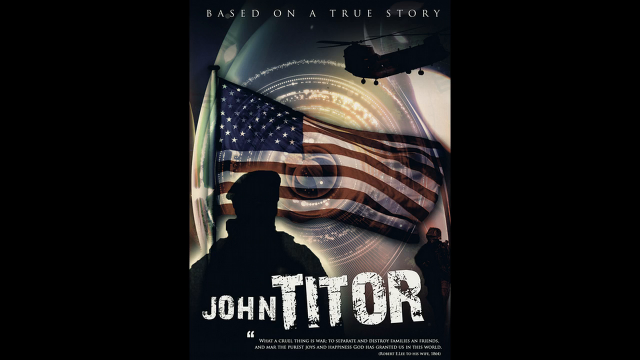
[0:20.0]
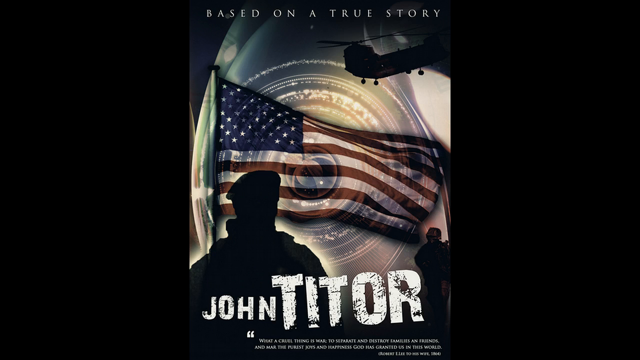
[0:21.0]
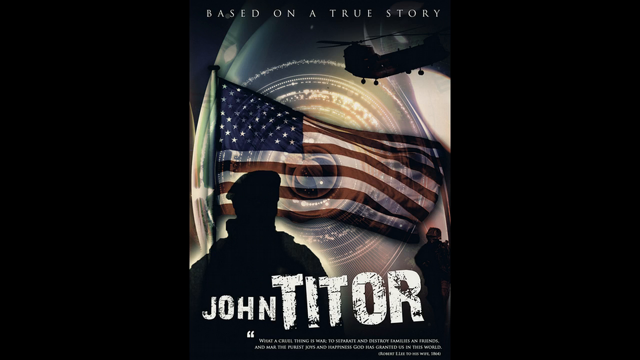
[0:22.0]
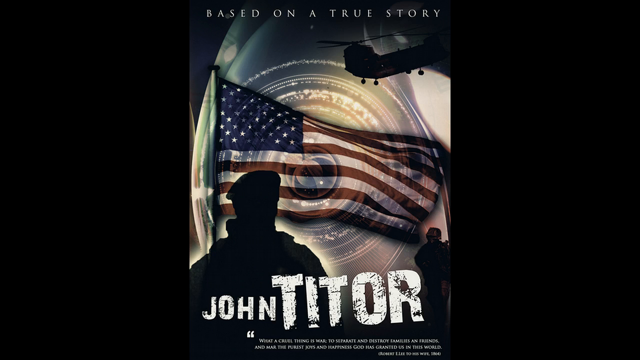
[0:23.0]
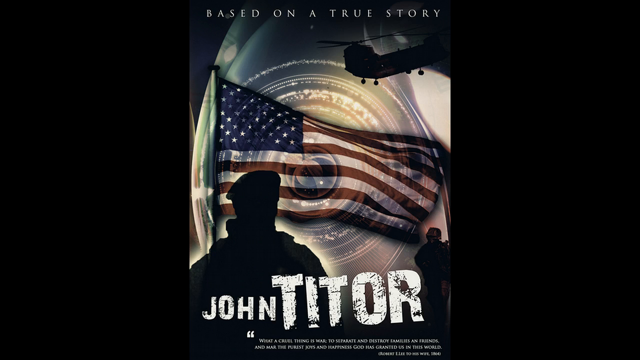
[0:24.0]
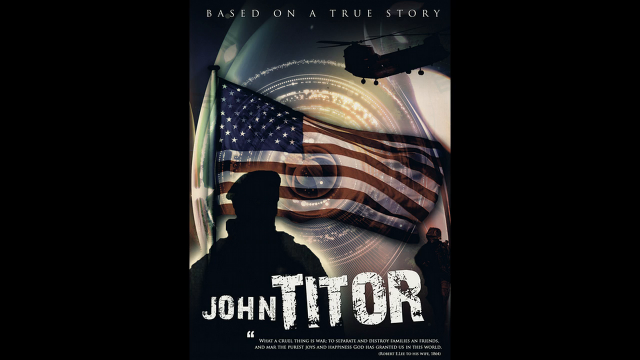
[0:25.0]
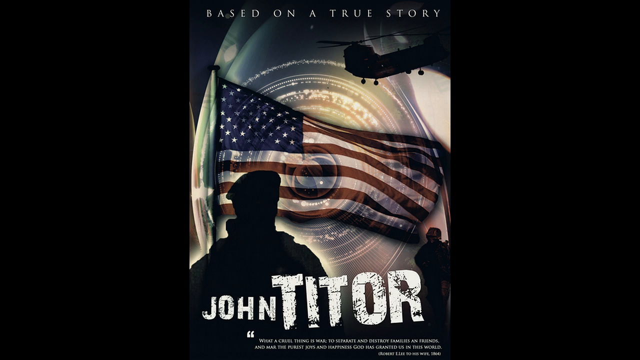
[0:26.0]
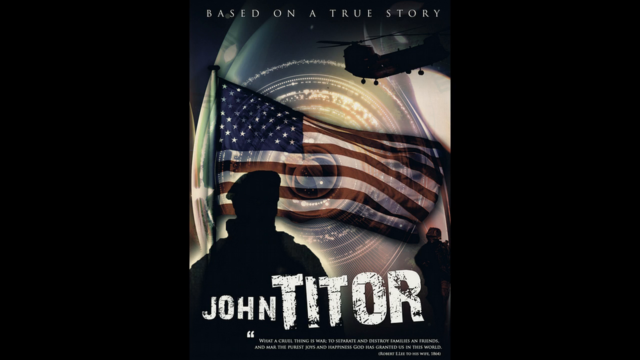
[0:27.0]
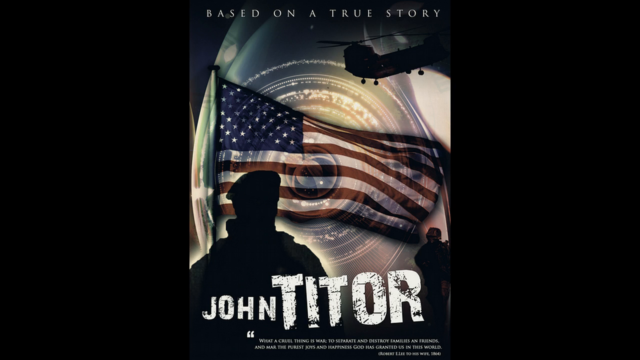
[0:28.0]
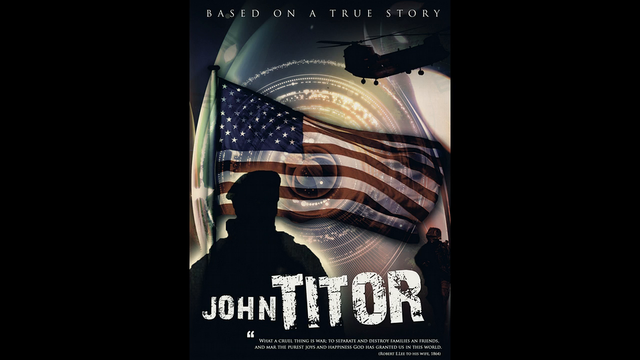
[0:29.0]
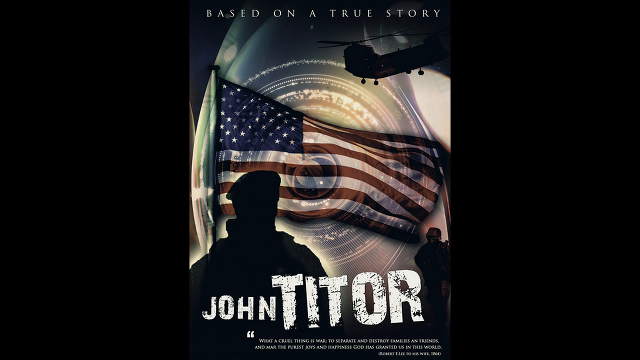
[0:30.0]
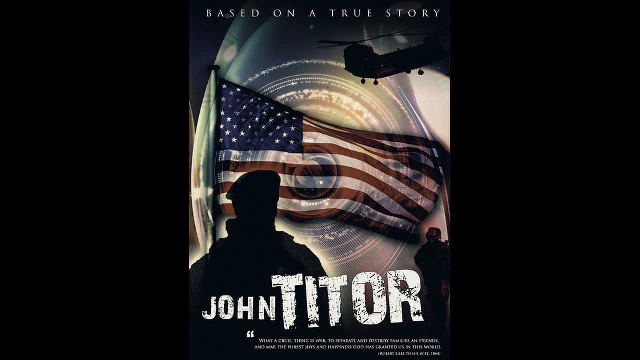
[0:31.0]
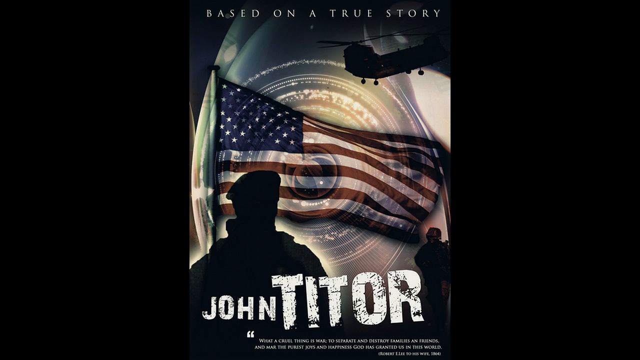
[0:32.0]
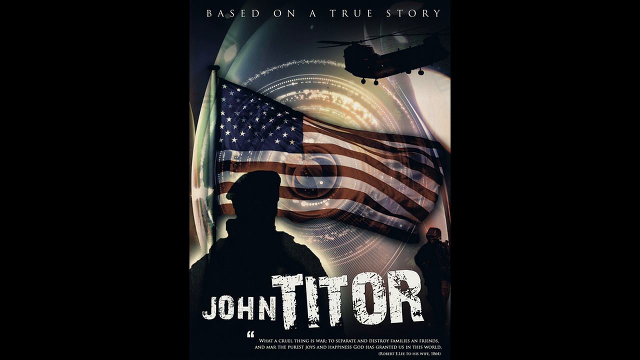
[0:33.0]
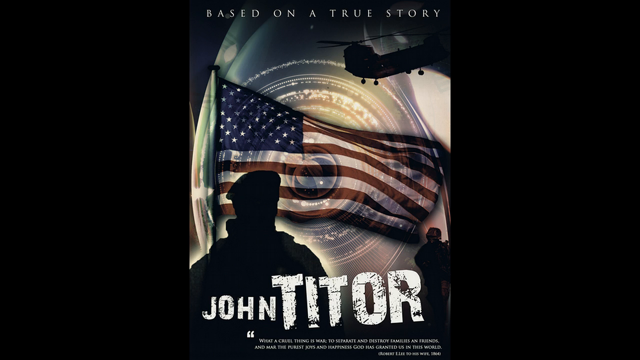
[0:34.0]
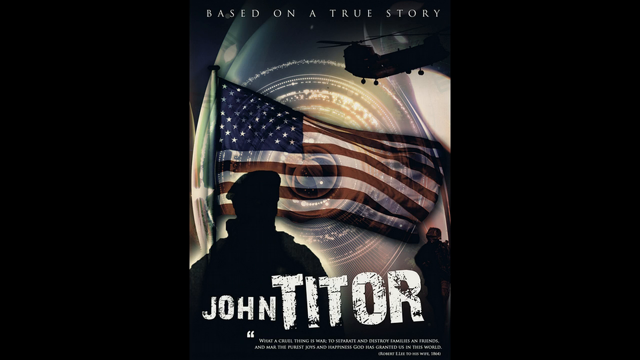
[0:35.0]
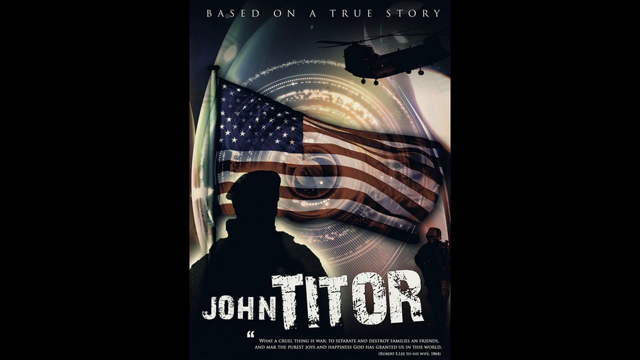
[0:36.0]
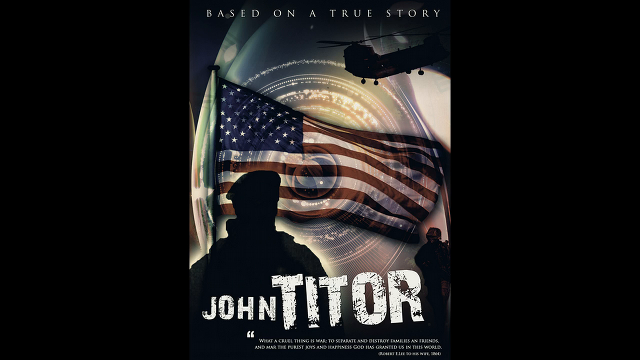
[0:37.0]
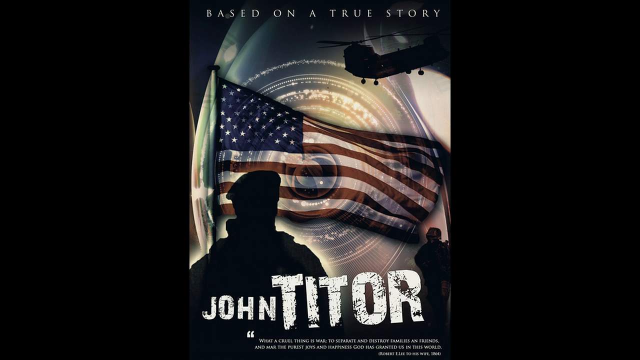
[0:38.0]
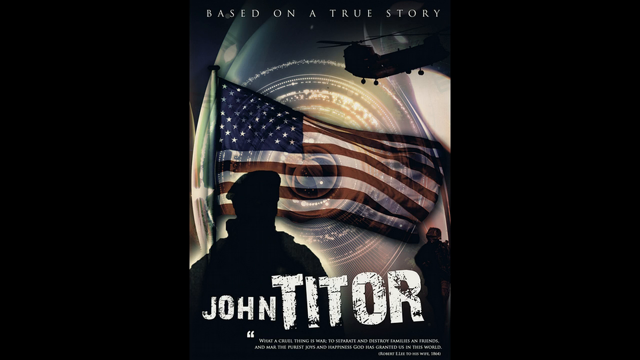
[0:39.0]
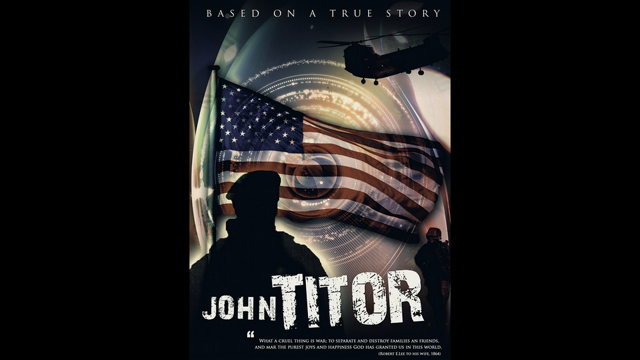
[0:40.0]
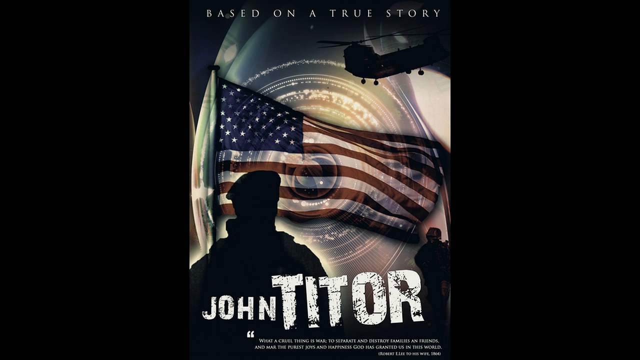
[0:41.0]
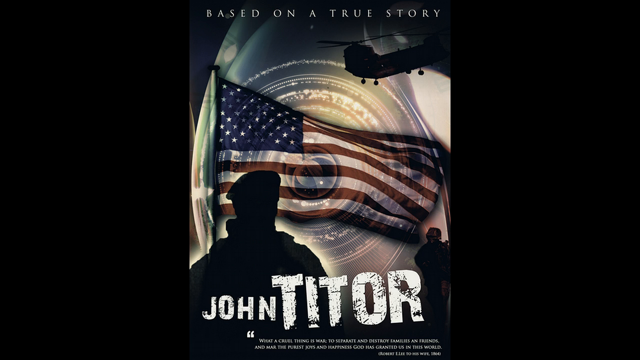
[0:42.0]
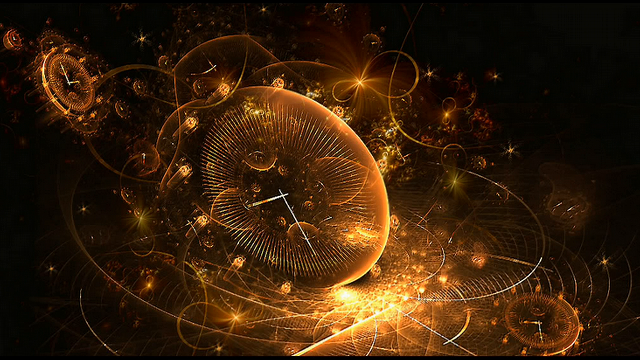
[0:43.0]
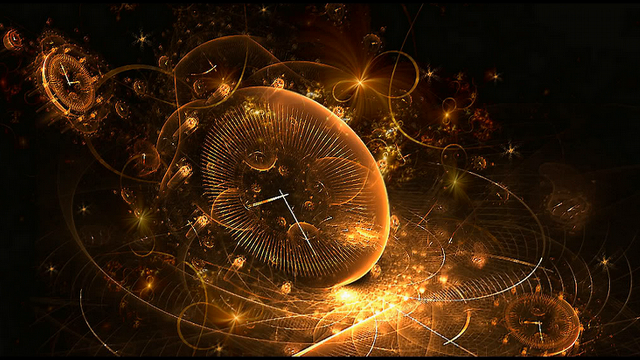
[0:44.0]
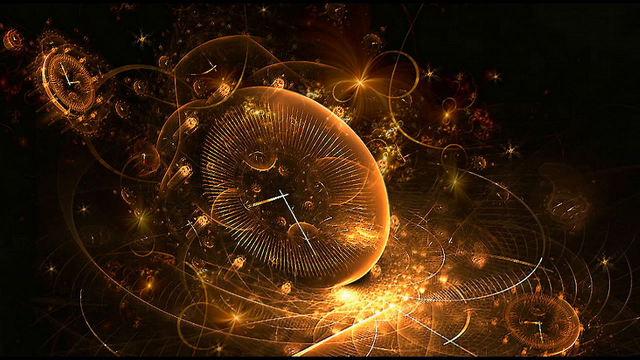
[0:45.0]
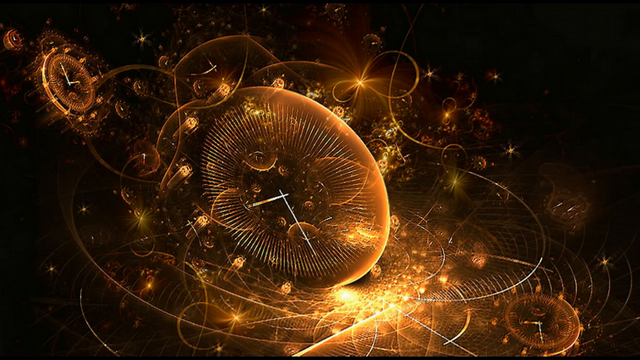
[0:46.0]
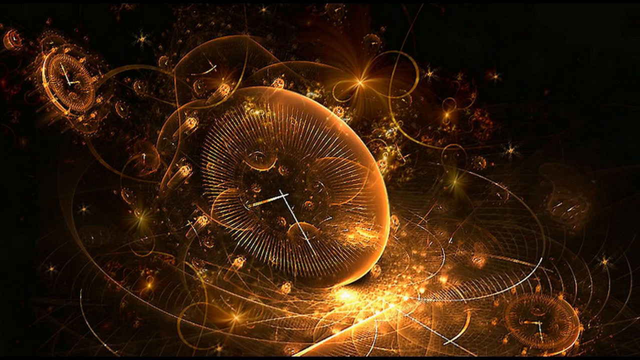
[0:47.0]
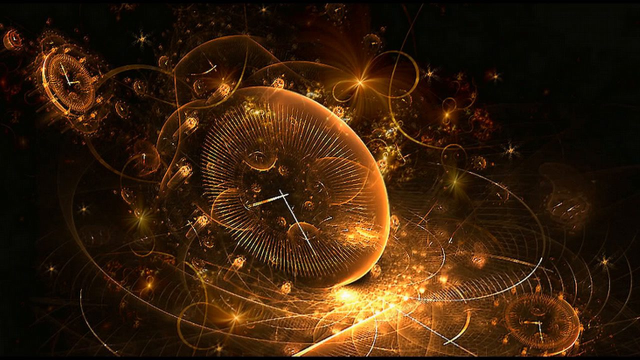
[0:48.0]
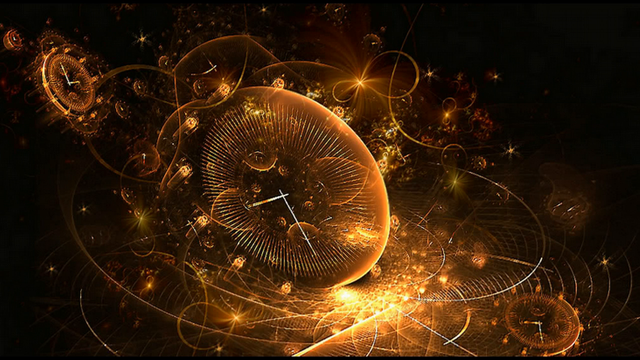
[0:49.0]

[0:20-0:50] The image of the poster for a movie called John Titor, also based on a true story, remains on screen. Its colors are white, black, red and red-blue, with a fluorescent-colored camera in the background. Little changes until a new image appears showing multiple clocks on a black background. The clocks are orange and white, and little wires around them form oval and circular shapes. Two clock hands are visible, and in the background there appear to be parts of a clock that make up a clock as a whole.